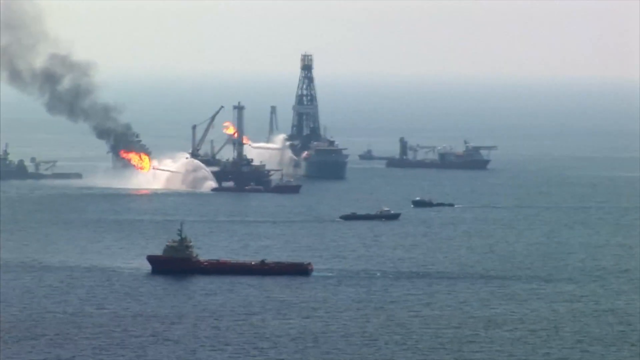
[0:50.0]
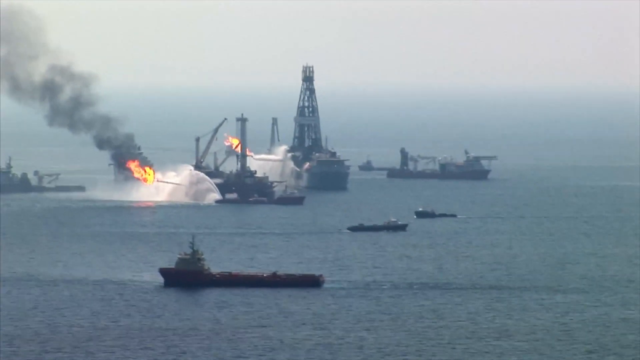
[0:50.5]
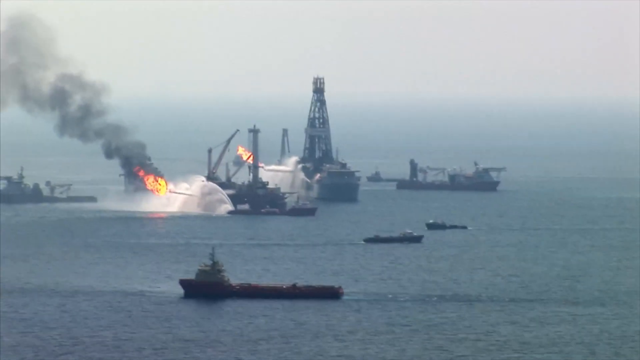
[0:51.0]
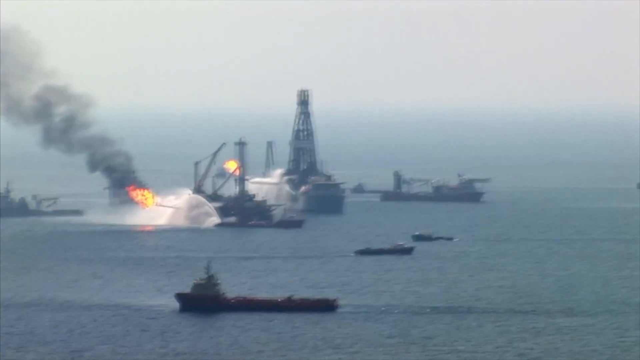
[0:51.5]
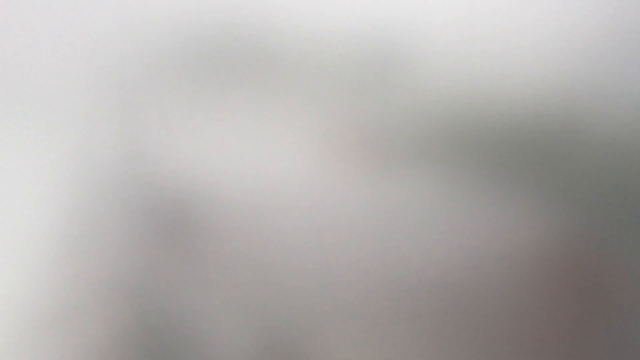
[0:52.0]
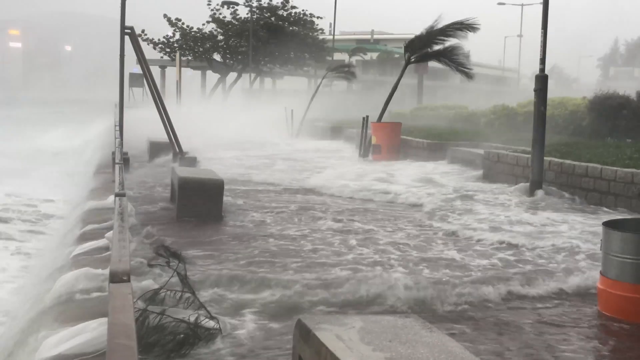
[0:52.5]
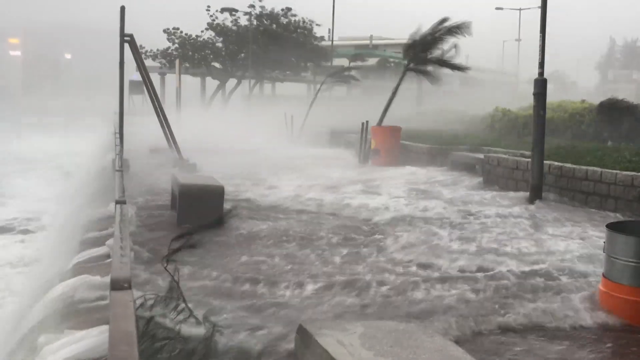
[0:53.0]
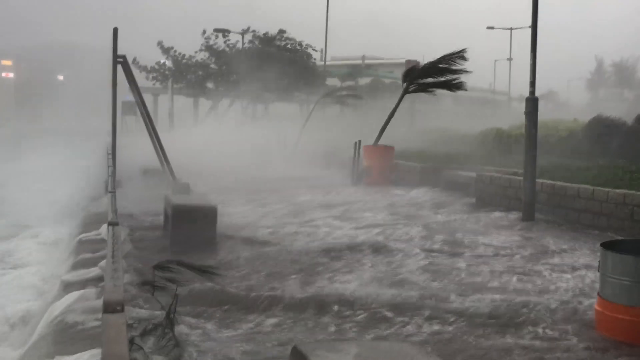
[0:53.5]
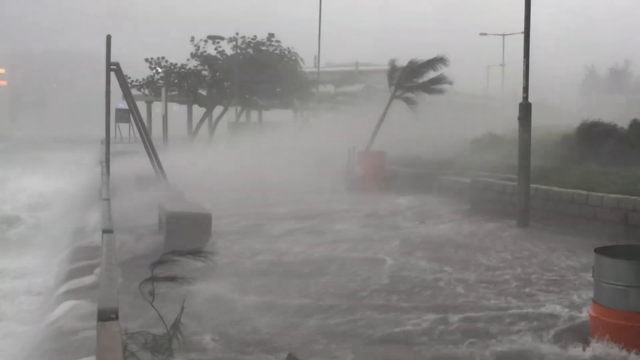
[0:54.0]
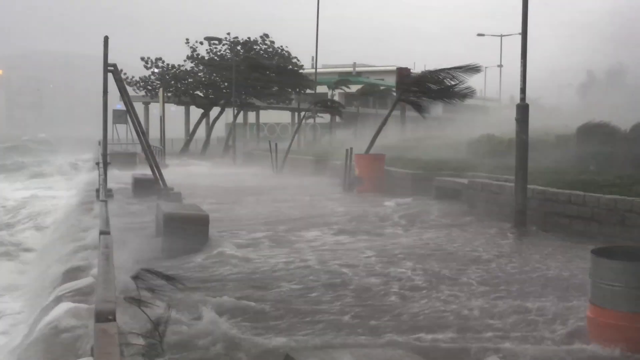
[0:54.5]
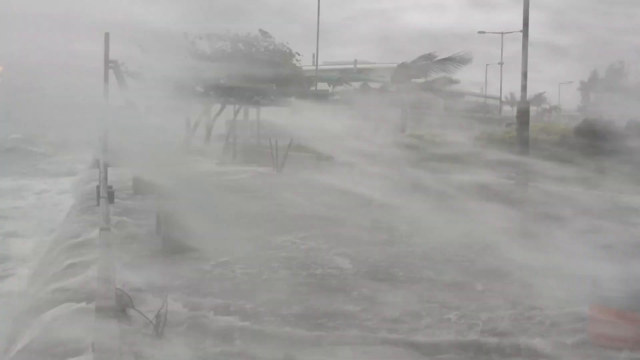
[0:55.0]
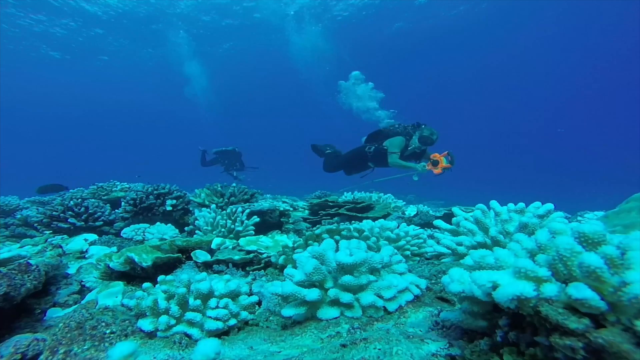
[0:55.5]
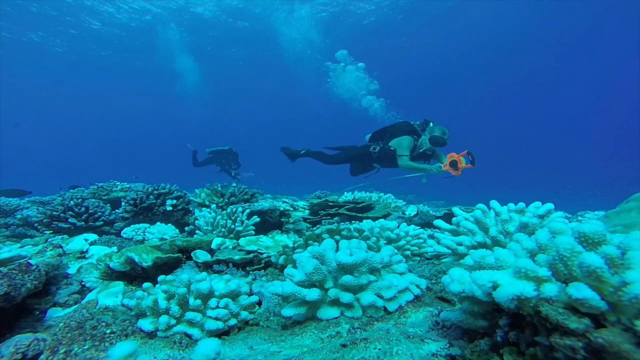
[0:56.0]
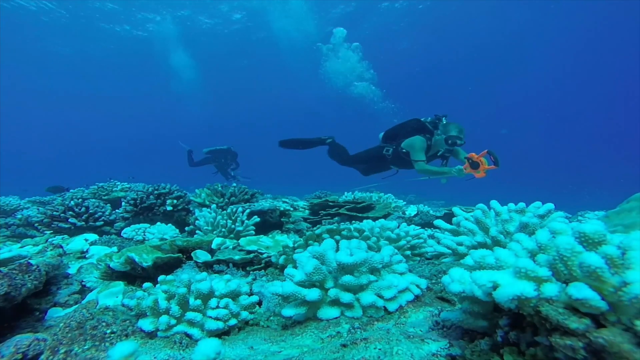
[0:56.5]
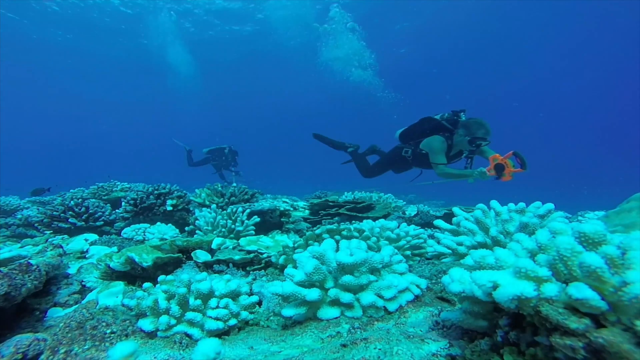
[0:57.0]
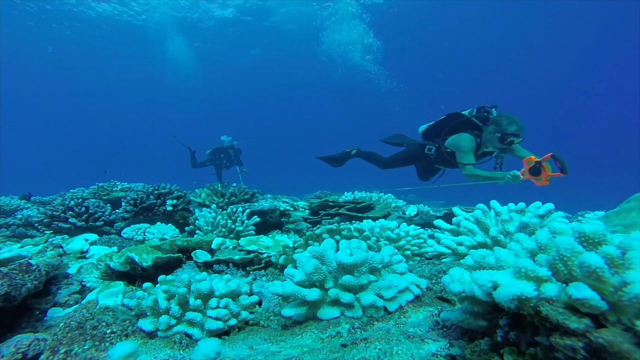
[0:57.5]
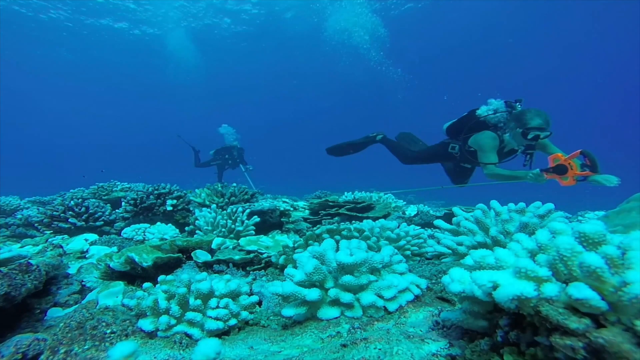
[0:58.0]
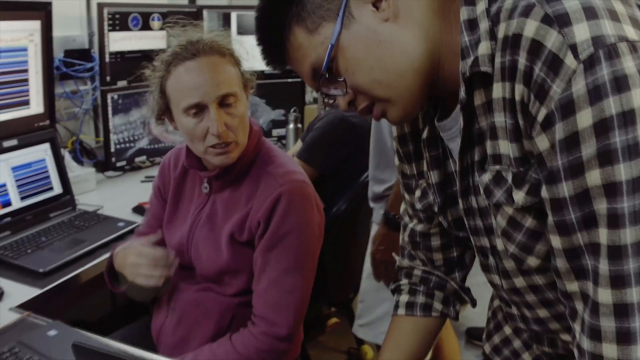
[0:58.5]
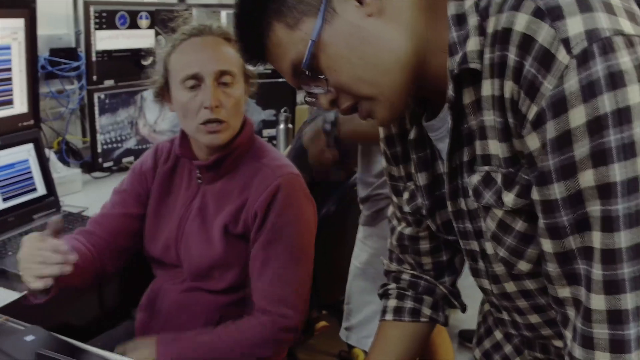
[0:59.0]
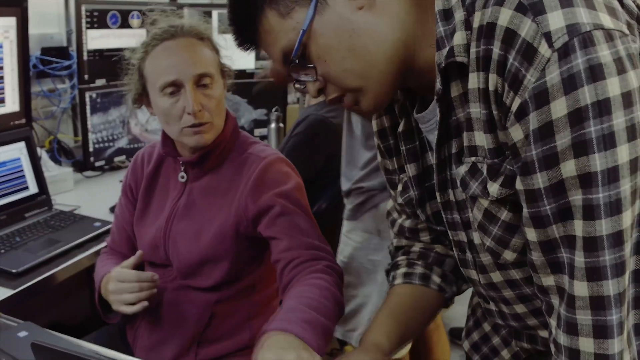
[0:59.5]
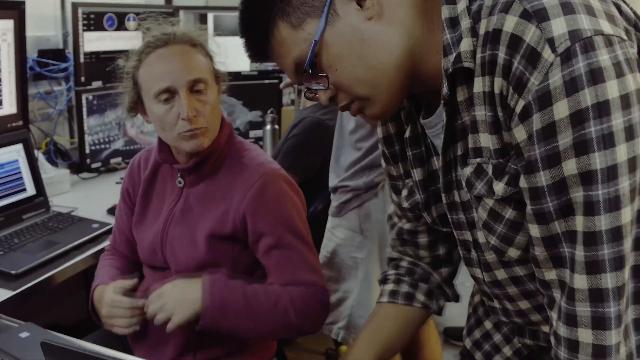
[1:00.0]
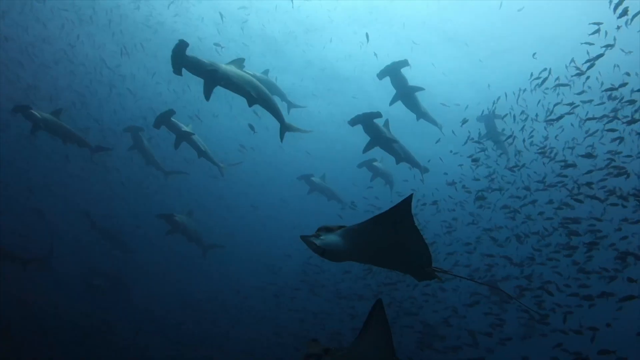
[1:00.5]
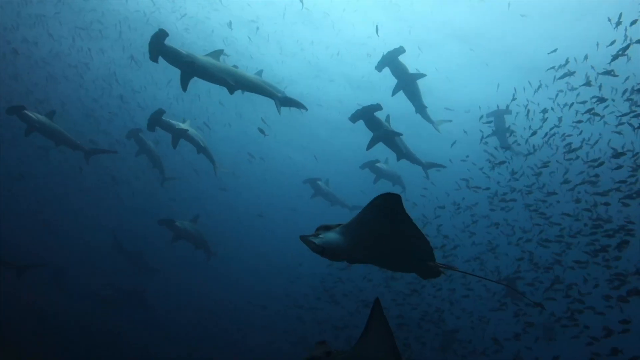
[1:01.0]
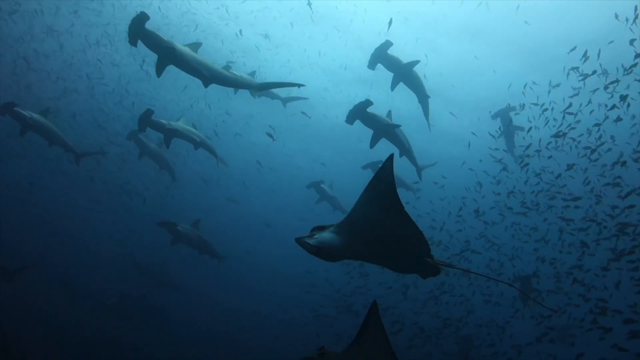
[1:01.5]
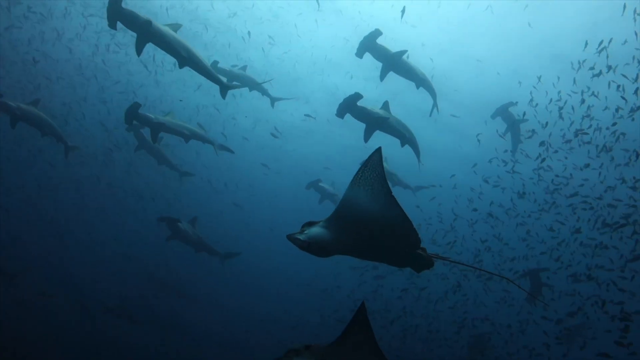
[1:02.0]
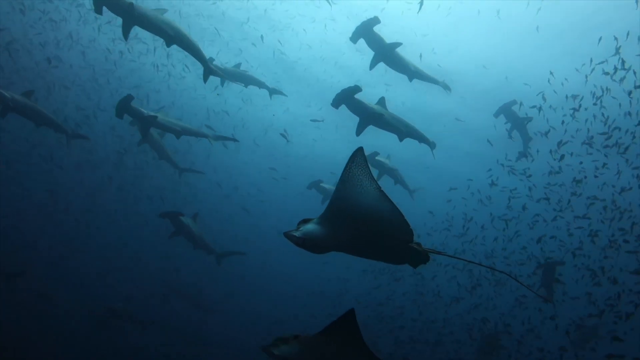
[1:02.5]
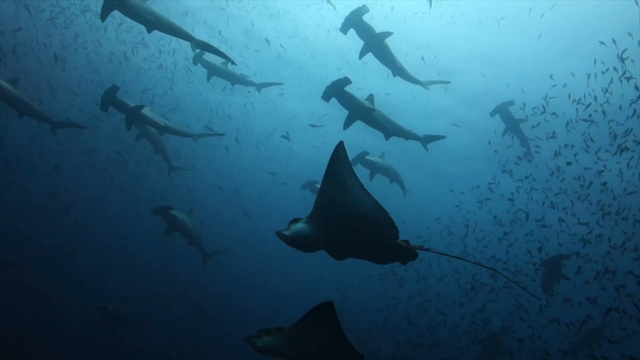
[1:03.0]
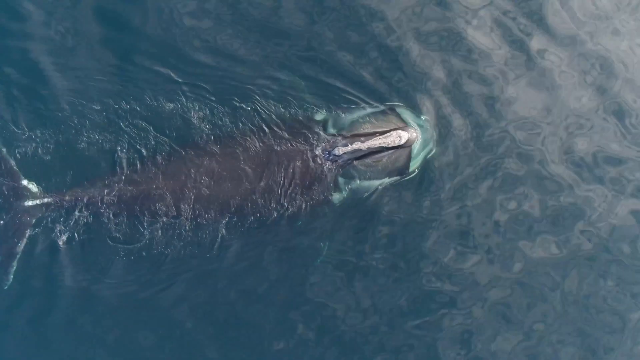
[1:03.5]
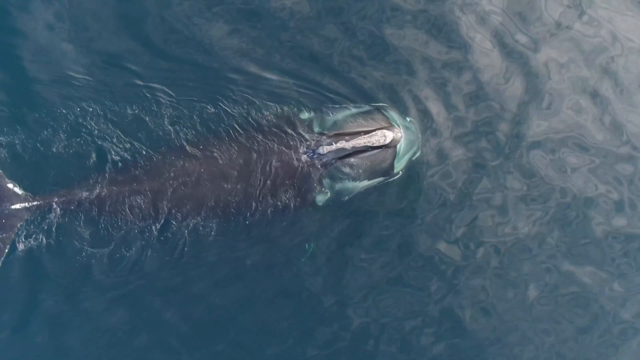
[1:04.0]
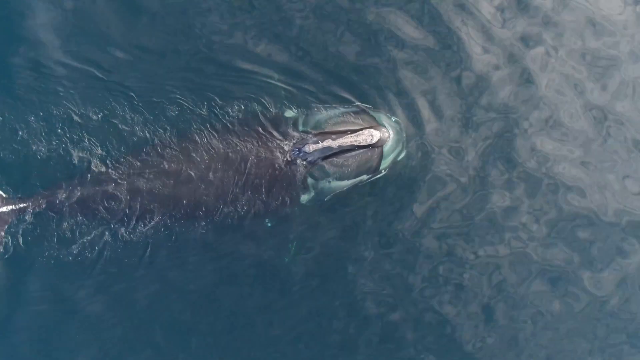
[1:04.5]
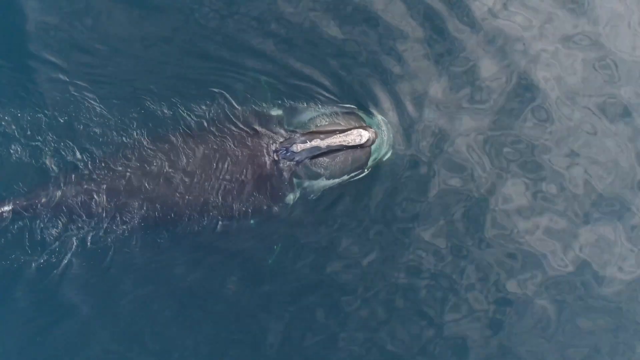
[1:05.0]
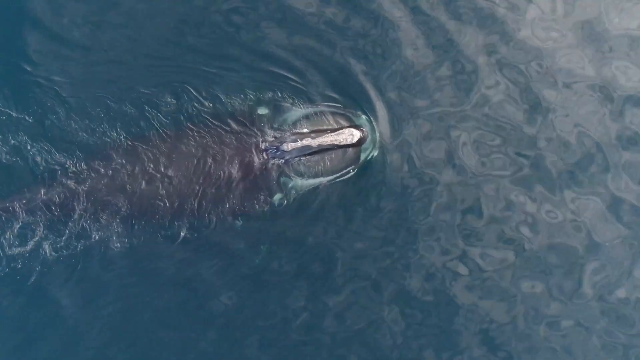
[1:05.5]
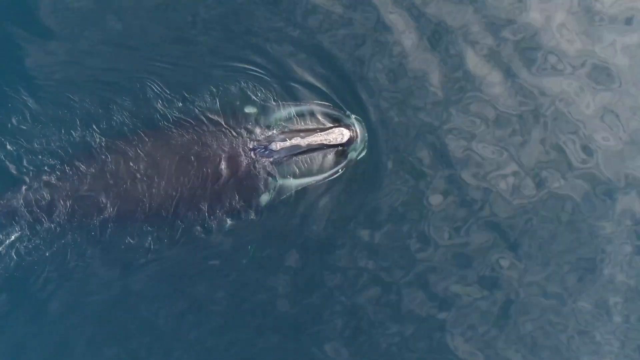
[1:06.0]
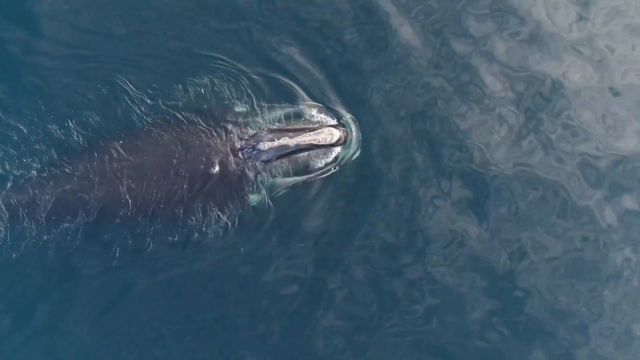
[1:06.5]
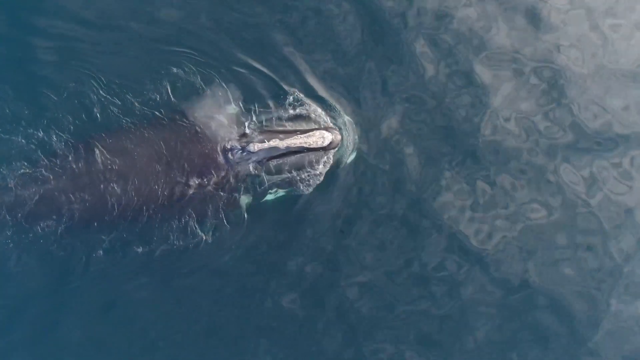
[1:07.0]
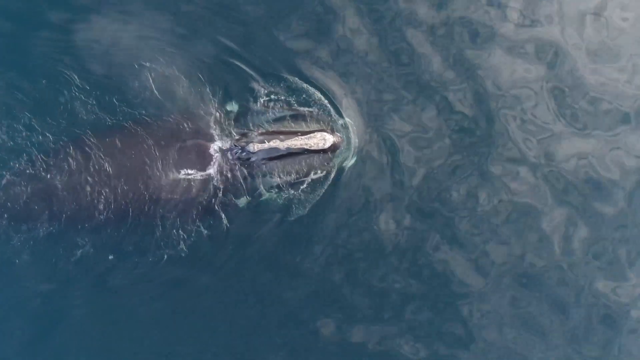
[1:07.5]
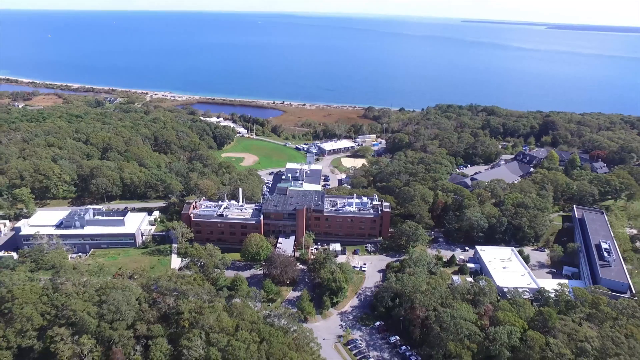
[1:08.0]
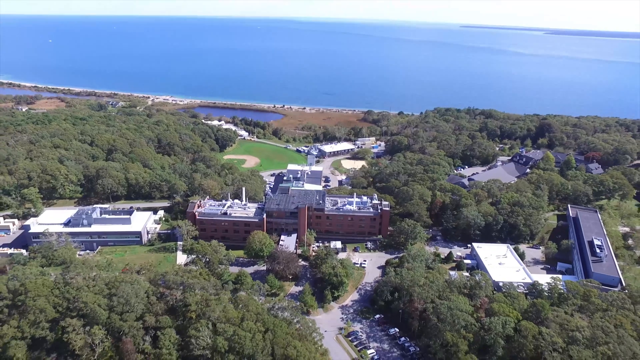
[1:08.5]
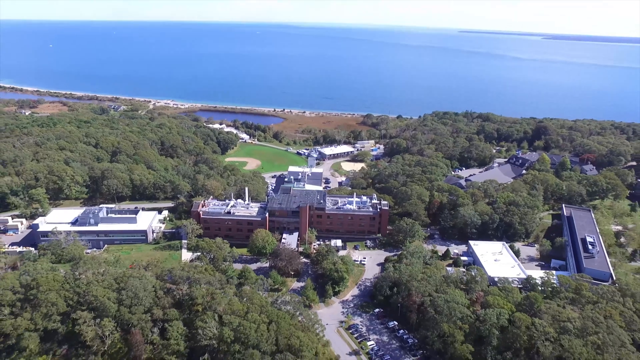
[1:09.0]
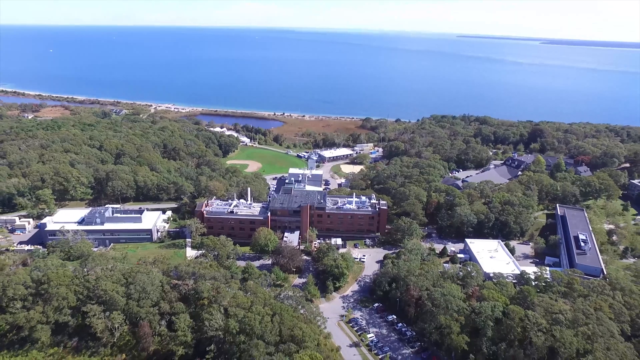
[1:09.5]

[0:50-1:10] A couple of boats are covered in smoke. The ocean is windy, and water pours over the edge of a foundation. Divers circulate around a place, collecting things for research. Researchers have a short conversation with each other, seemingly discussing something important. Underwater, big and small fish swim in the area, and one big fish is visible. A landscape view shows the ocean with blue water and a city with big buildings and nice architecture.